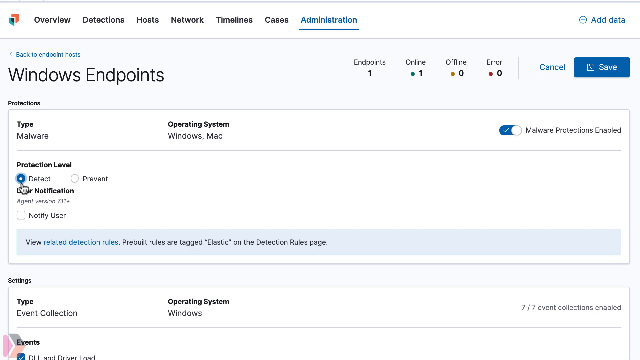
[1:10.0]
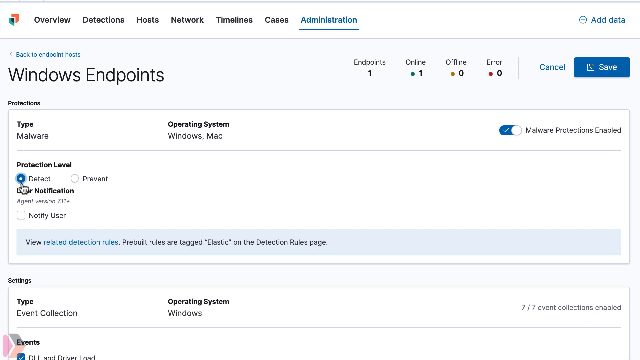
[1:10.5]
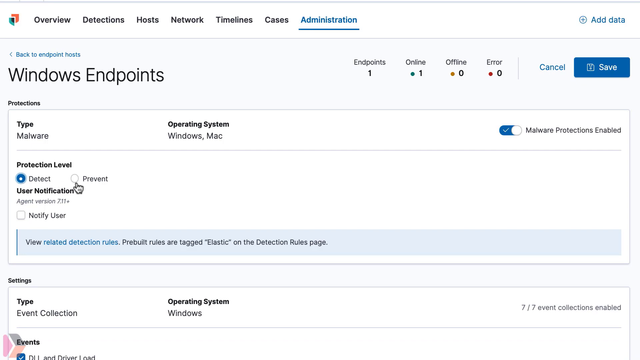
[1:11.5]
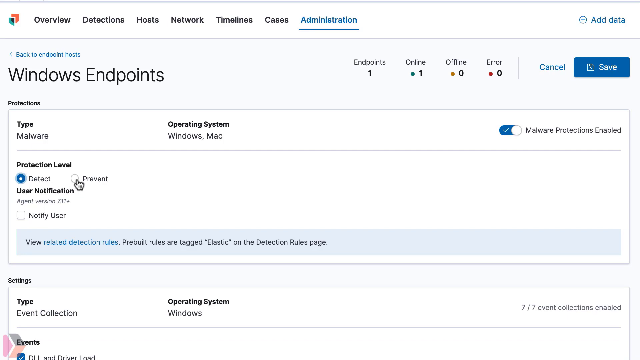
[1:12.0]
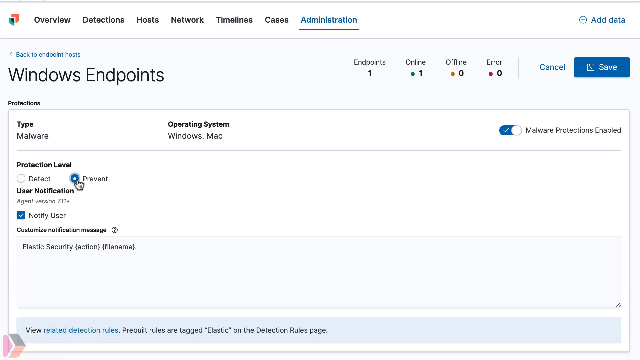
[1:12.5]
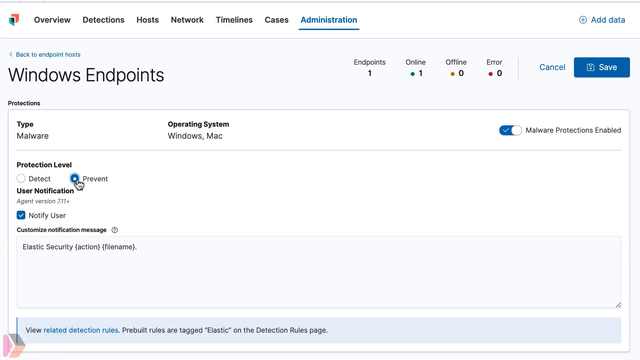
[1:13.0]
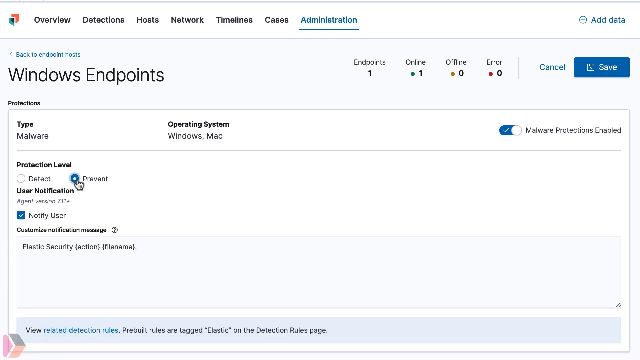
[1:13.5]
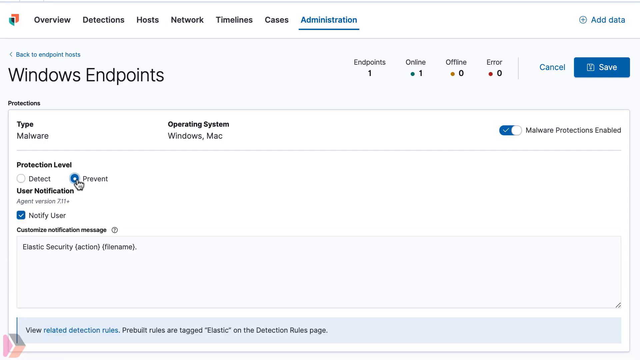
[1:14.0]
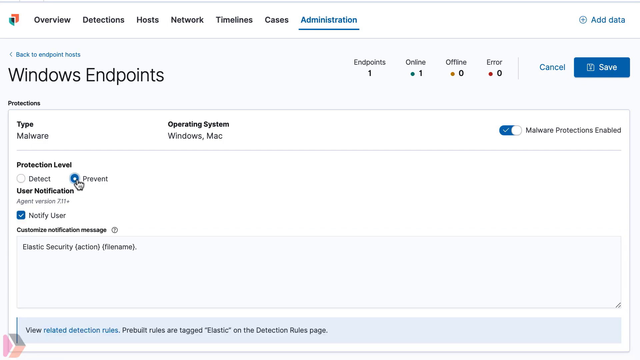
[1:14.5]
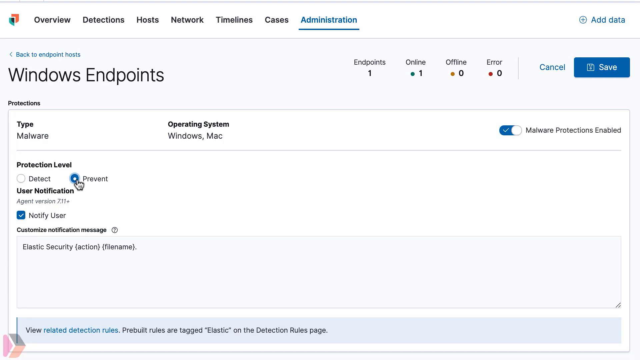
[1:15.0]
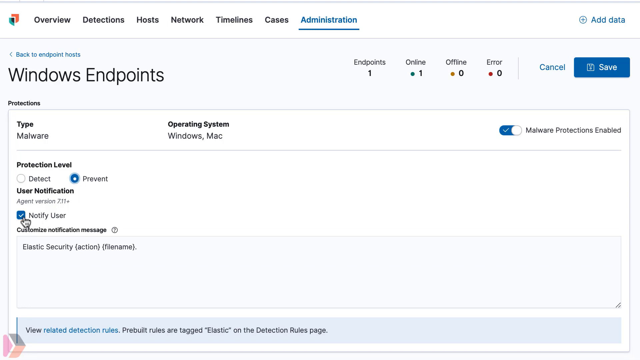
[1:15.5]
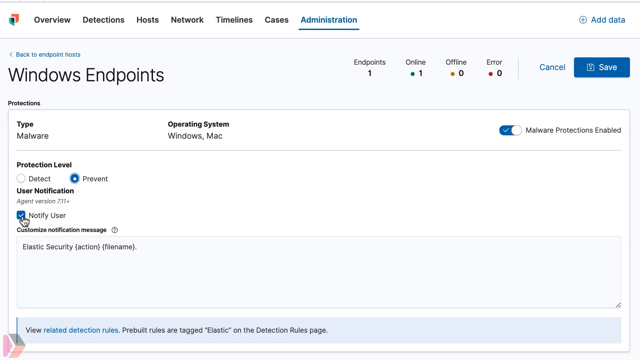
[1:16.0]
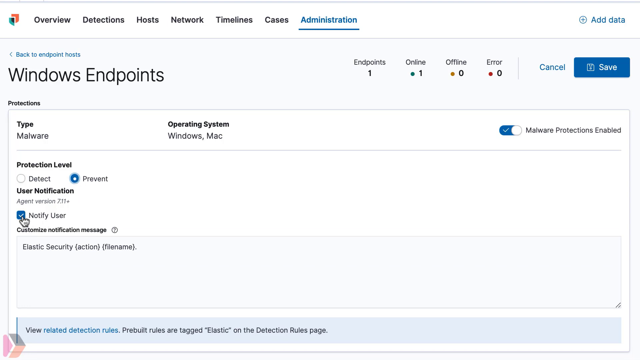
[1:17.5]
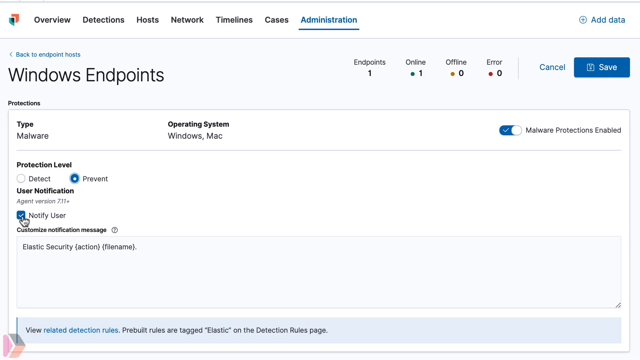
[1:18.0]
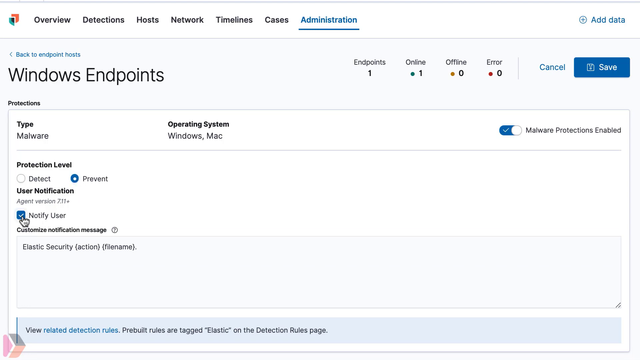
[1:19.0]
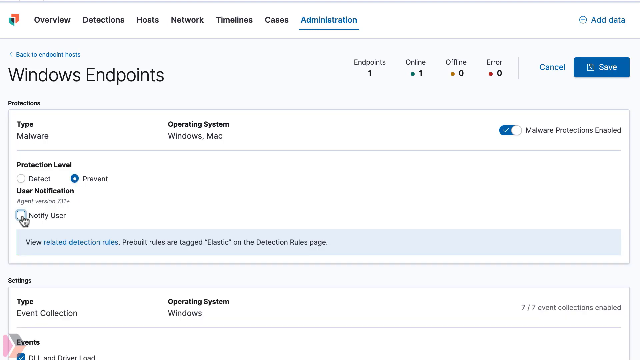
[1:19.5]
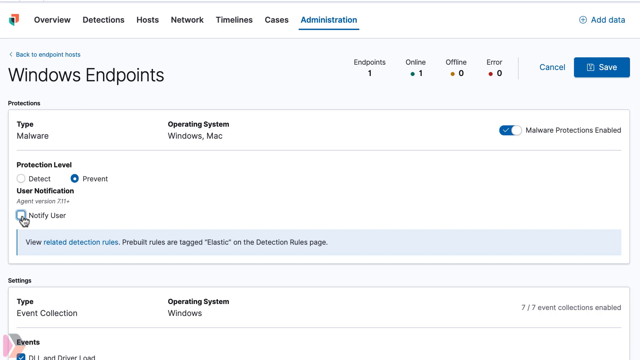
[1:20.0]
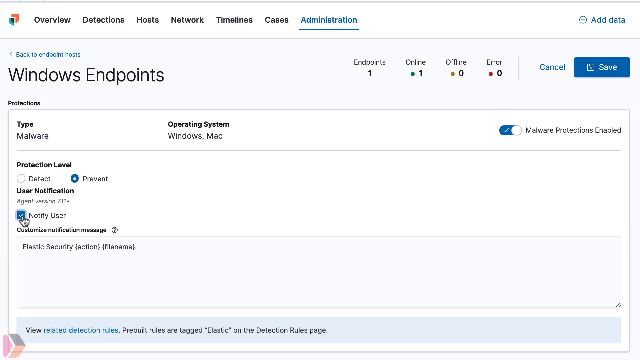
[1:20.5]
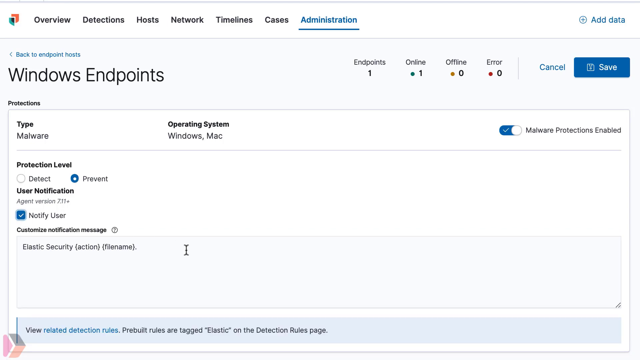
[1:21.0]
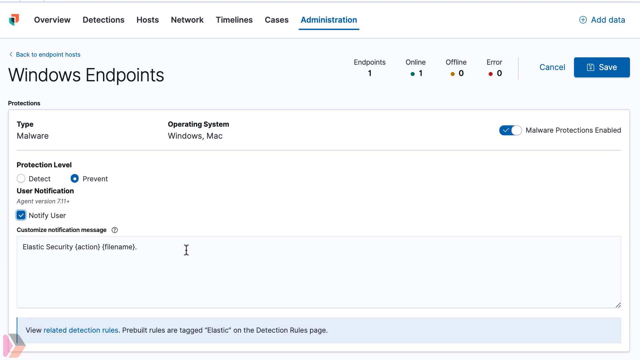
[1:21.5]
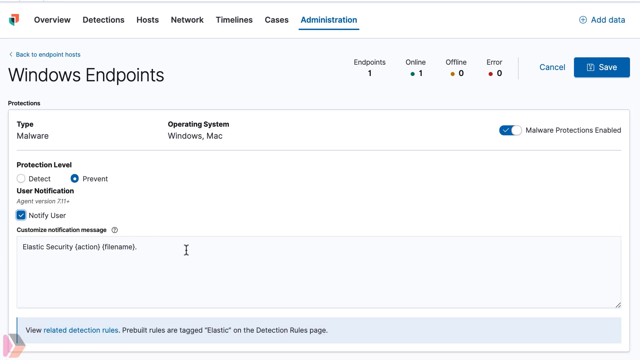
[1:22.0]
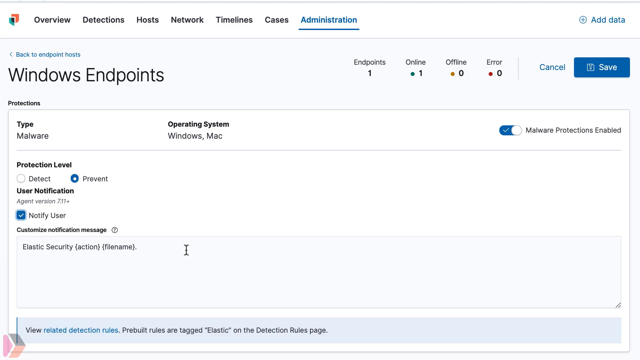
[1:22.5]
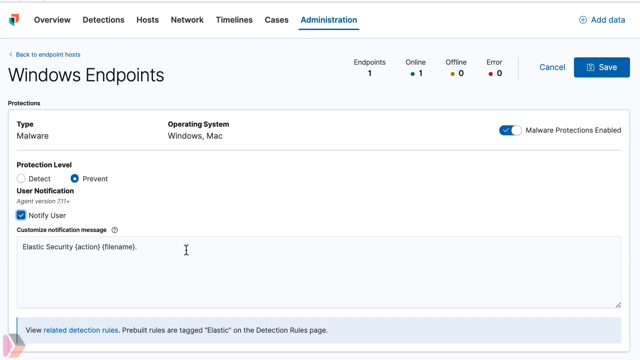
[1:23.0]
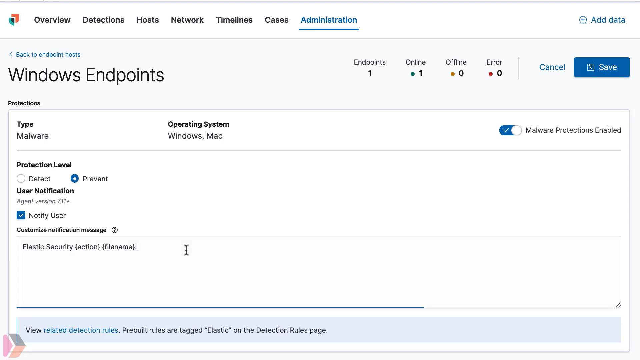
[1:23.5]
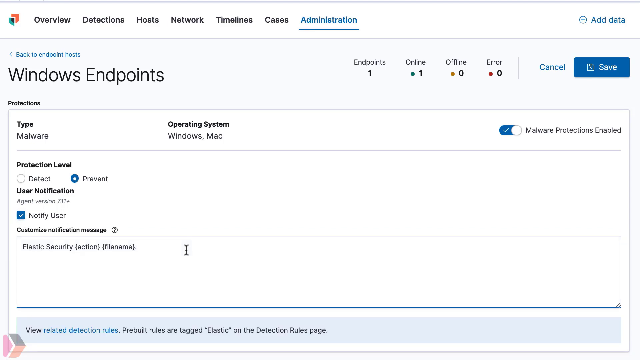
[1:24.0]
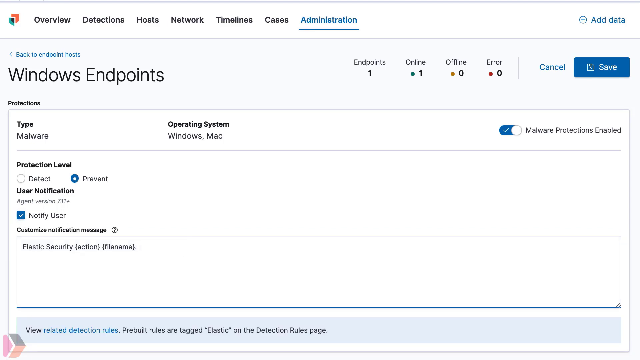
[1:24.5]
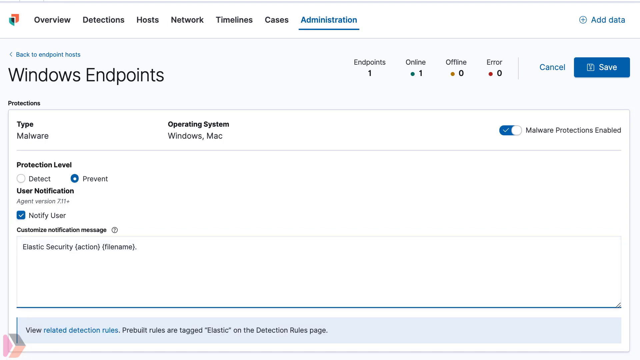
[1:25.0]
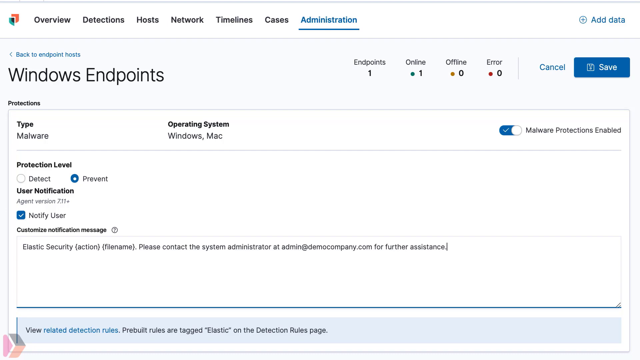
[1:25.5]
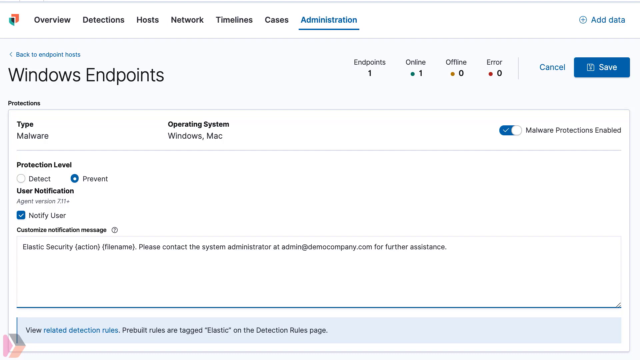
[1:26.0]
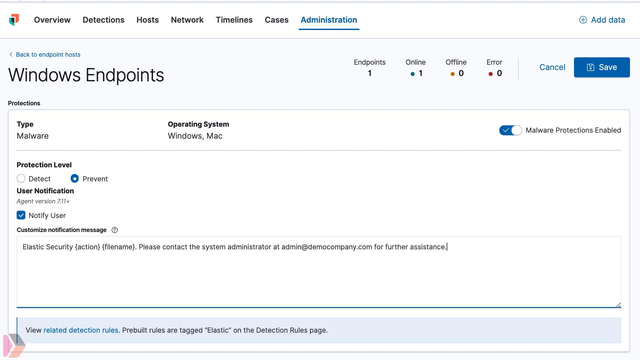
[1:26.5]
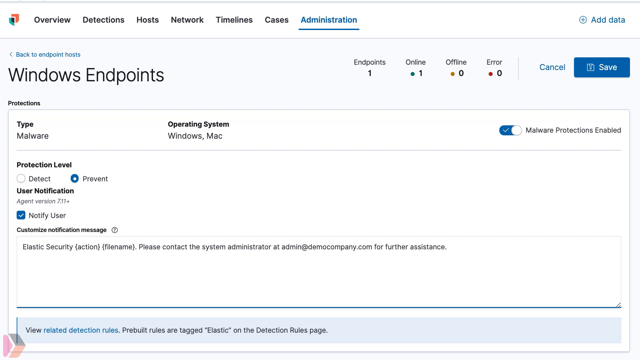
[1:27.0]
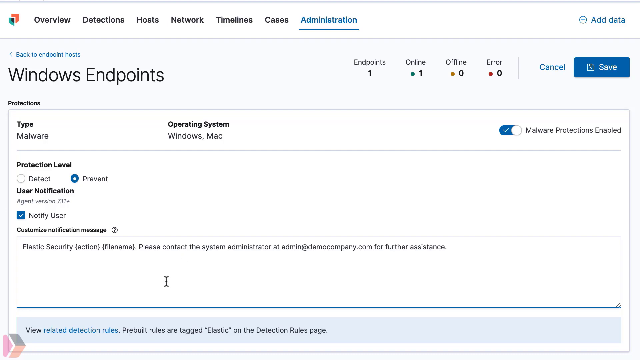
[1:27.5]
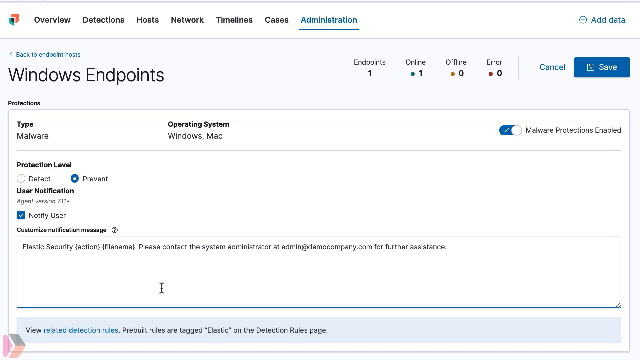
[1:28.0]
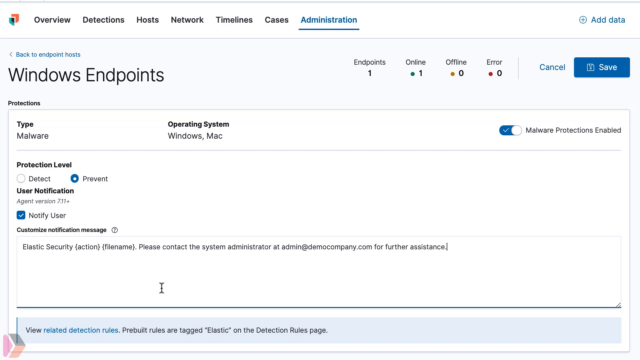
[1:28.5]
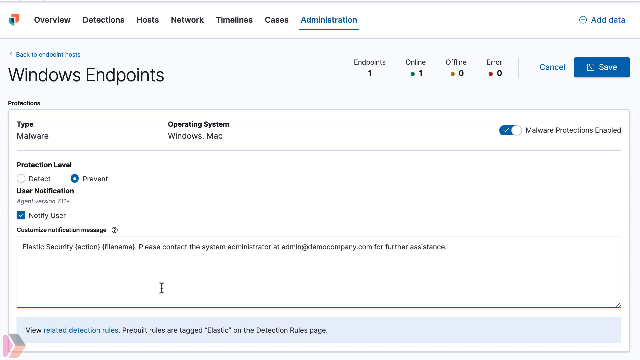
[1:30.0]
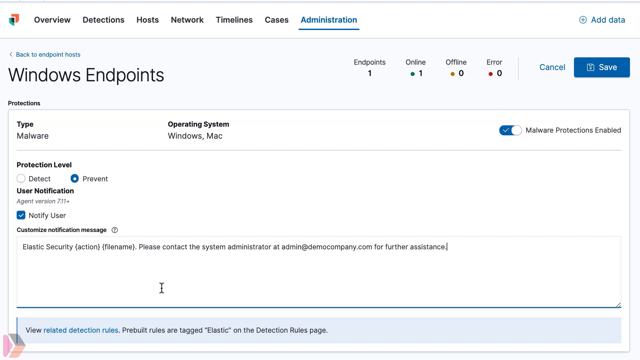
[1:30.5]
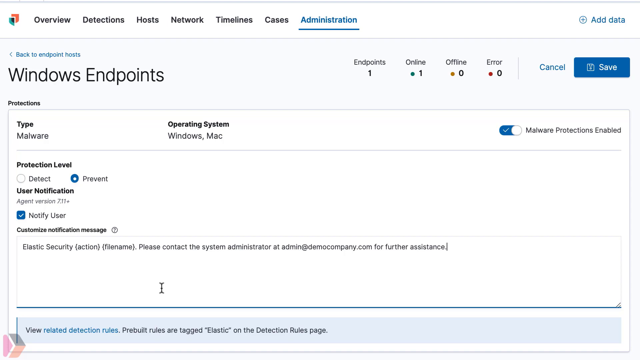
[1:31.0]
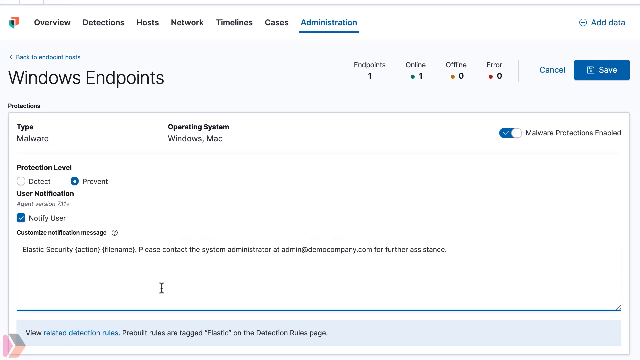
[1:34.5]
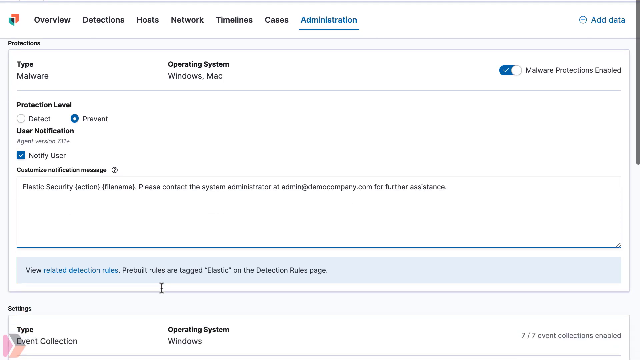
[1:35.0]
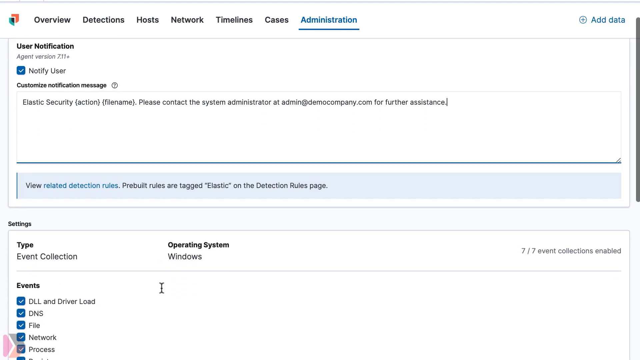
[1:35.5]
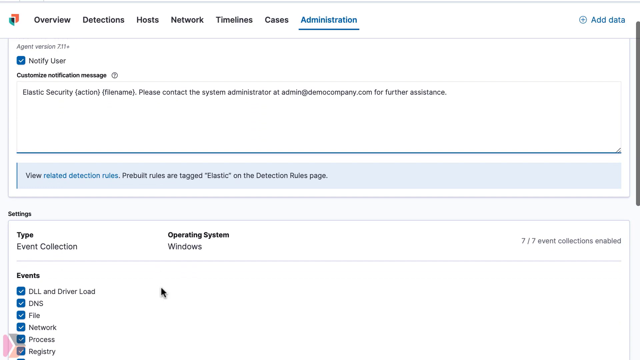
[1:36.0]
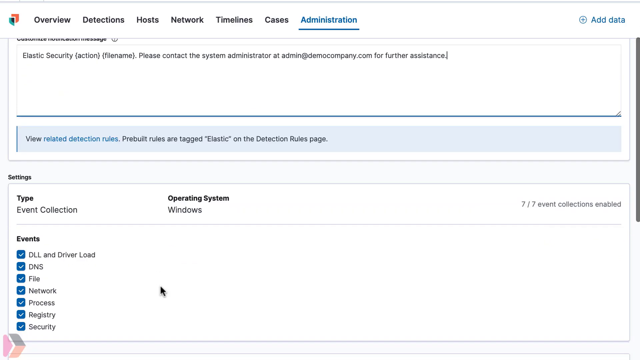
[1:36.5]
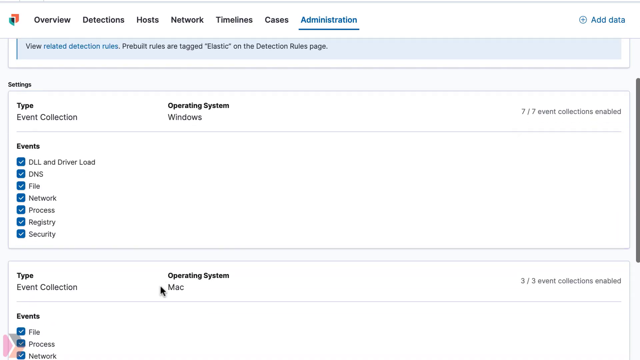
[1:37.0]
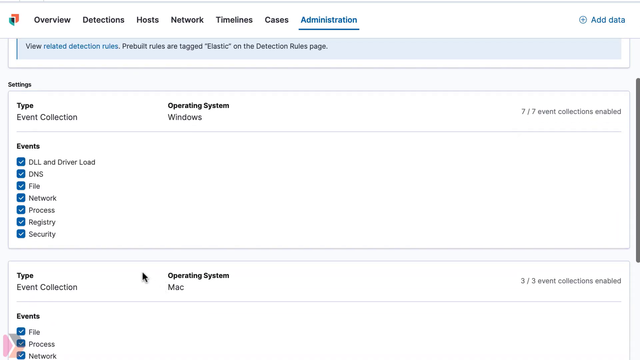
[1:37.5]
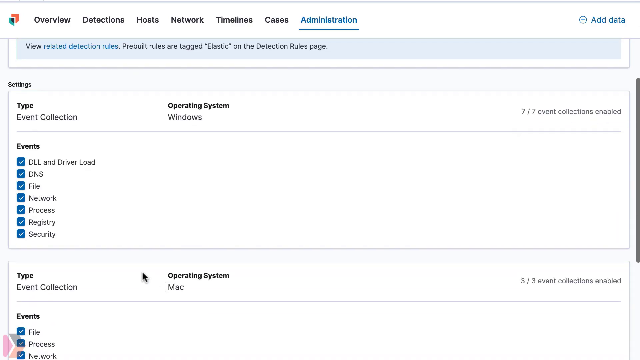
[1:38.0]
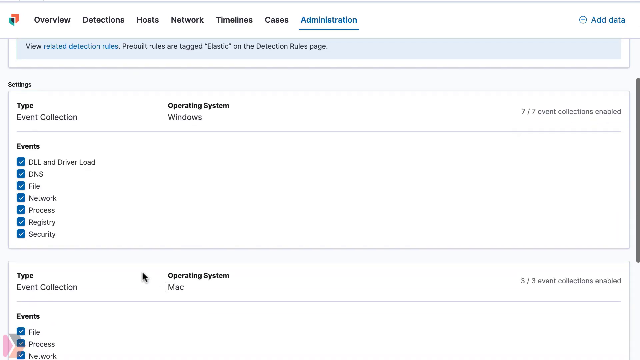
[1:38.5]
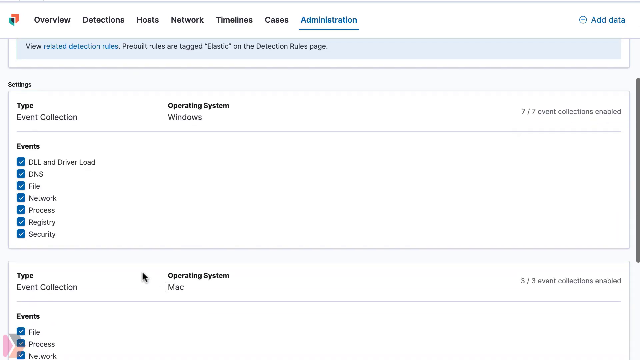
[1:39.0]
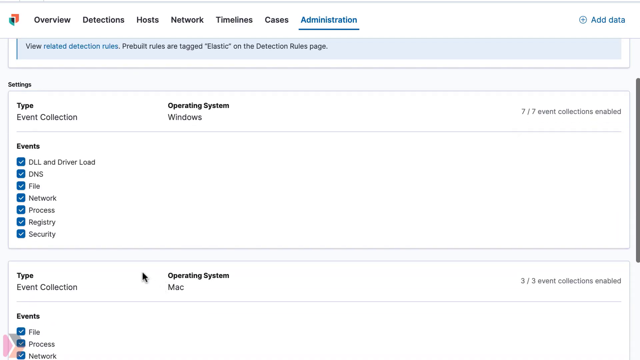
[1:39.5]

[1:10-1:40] A box on the board reads "endpoints", and the arrow hits prevent, which is checked. Notify user is checked, and another box pops up. He clicks notify user again very fast. The arrow comes down to the notification message, "elastic security action". The view scrolls down to an area about "tagged elastic", highlights it, and scrolls back up to the section of the window about endpoints. After notify user is clicked, the box that pops up reads "prebuilt rules are tagged elastic on the detection rules page". Once that is clicked, "please contact the system administrator" flashes by, with the system administrator's email address, admin@democompany.com. The page scrolls down to the next area under administration, showing type event collection and operating system Windows. To the right, in very small letters, it reads "7/7 event configurations enabled".